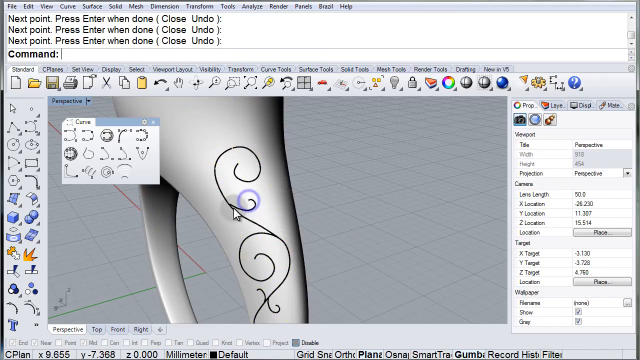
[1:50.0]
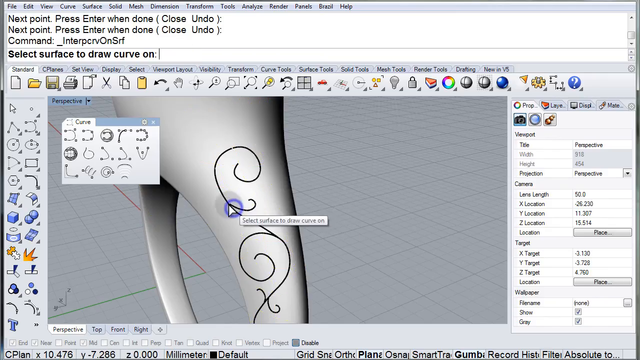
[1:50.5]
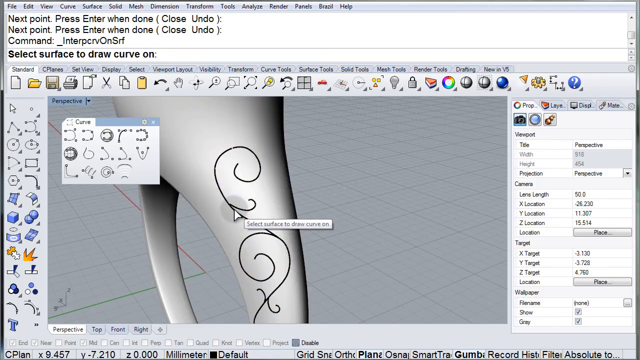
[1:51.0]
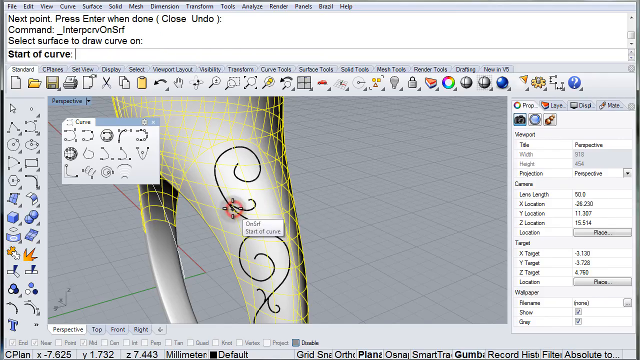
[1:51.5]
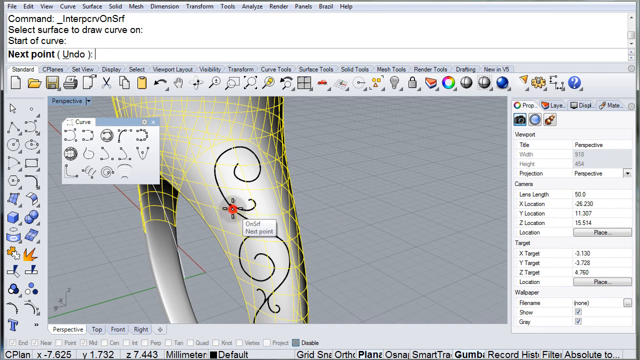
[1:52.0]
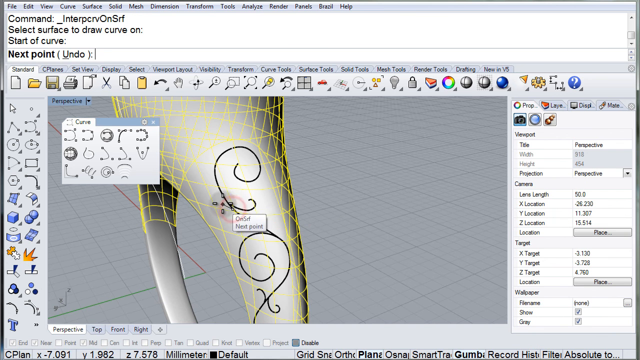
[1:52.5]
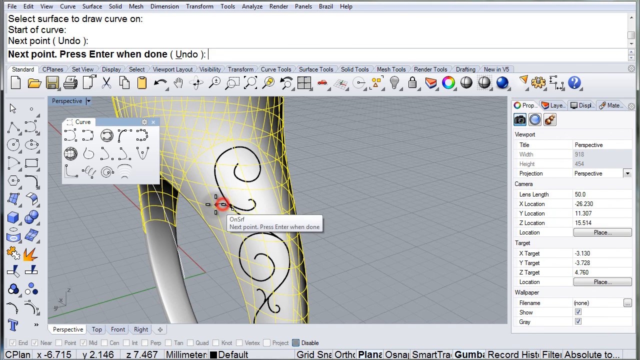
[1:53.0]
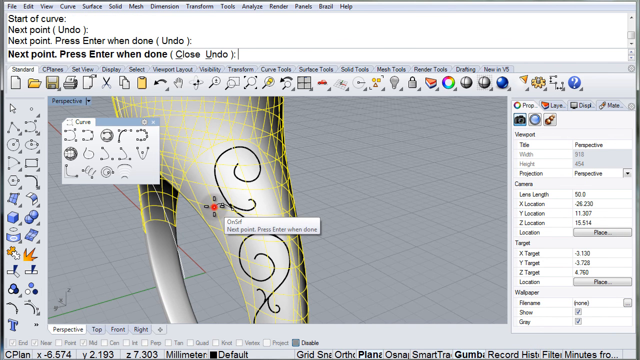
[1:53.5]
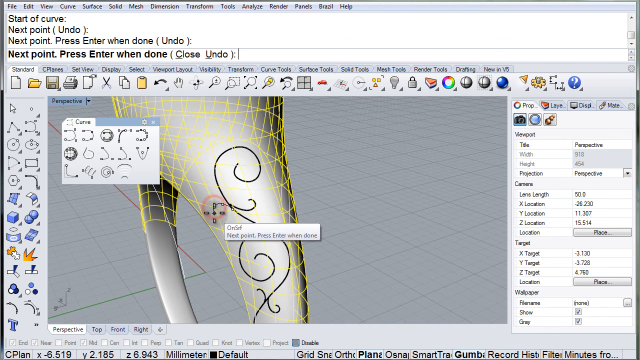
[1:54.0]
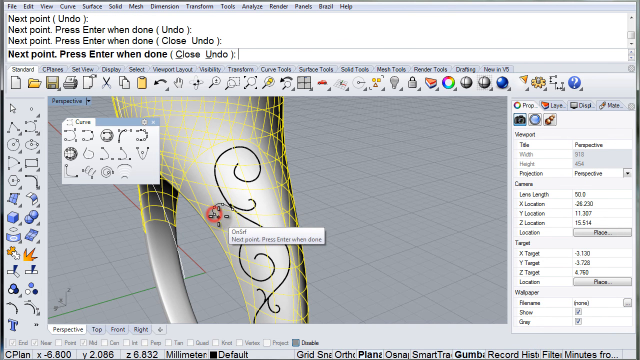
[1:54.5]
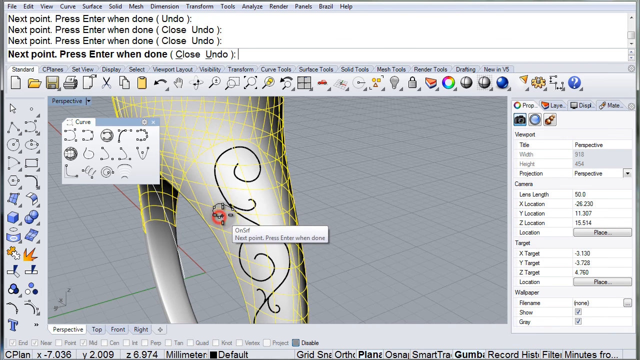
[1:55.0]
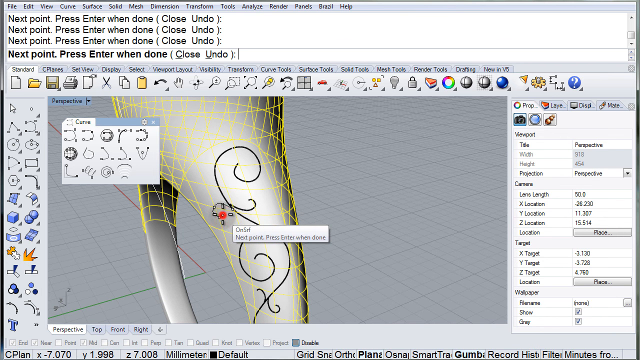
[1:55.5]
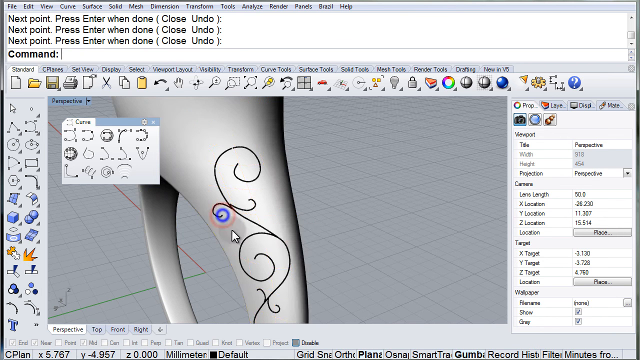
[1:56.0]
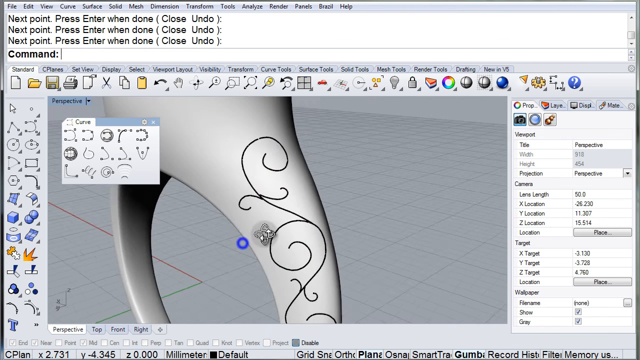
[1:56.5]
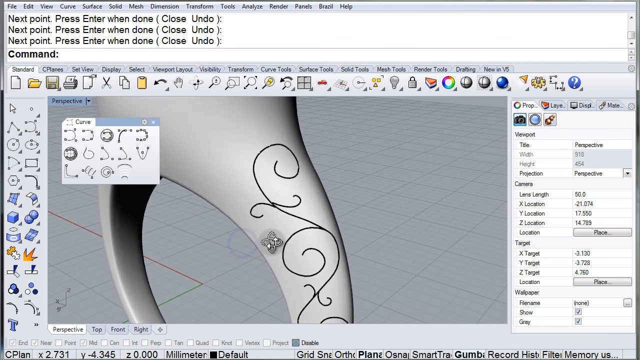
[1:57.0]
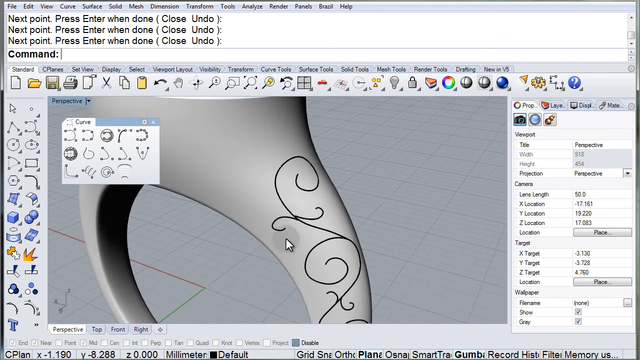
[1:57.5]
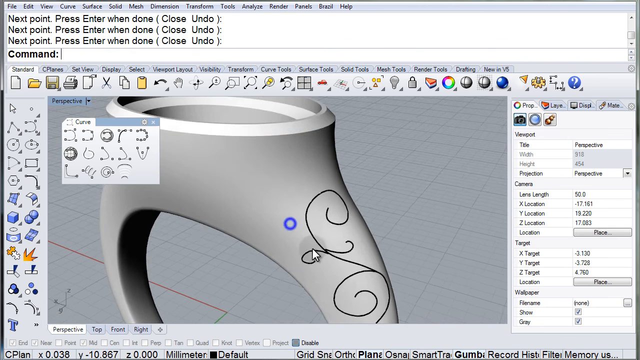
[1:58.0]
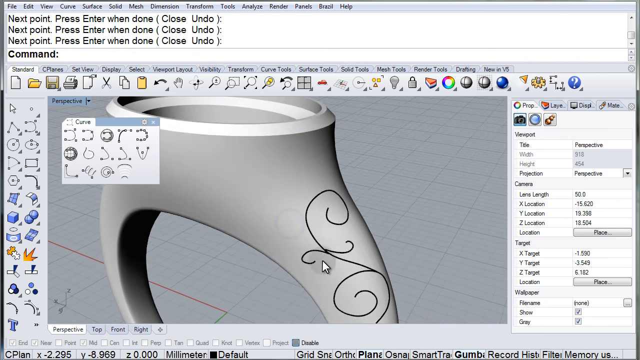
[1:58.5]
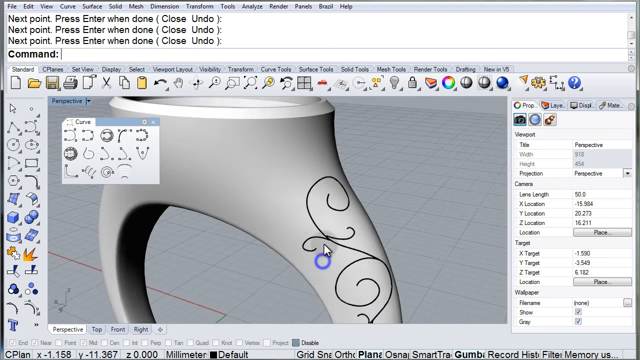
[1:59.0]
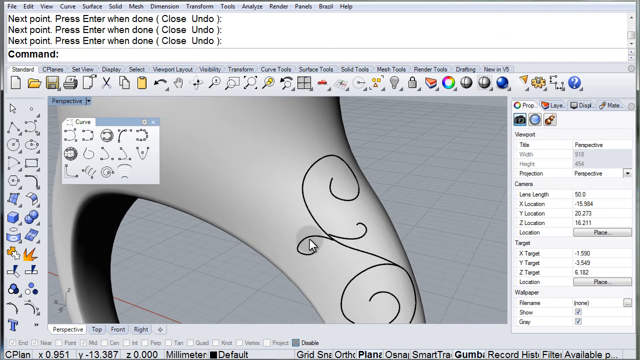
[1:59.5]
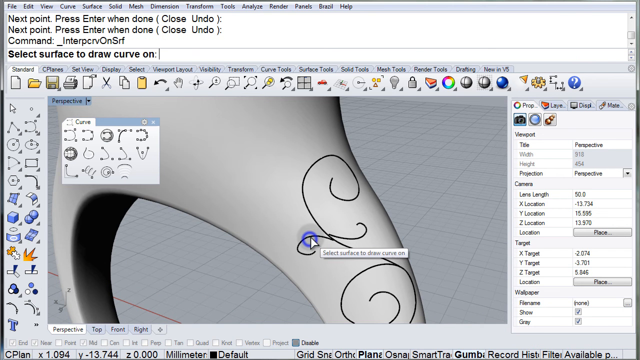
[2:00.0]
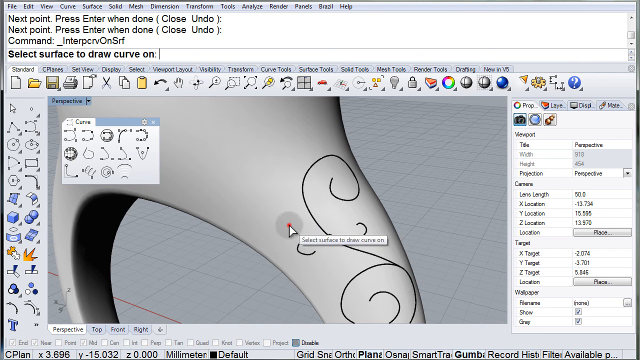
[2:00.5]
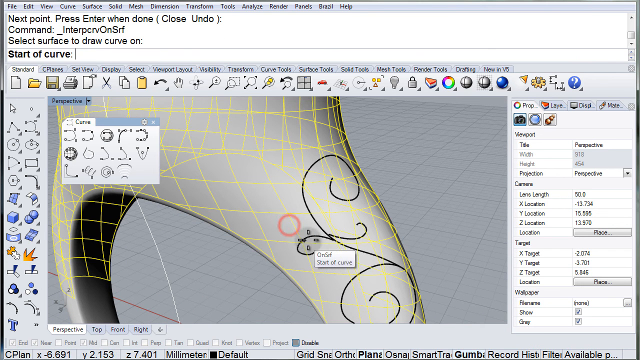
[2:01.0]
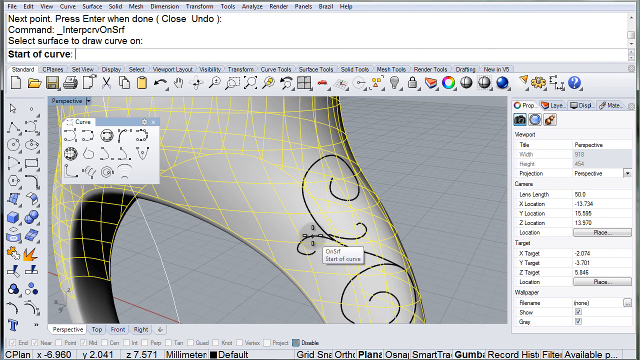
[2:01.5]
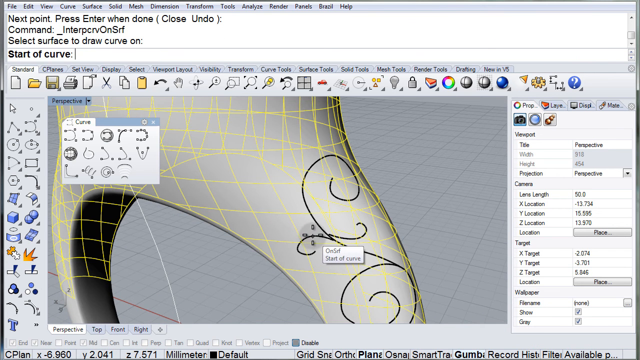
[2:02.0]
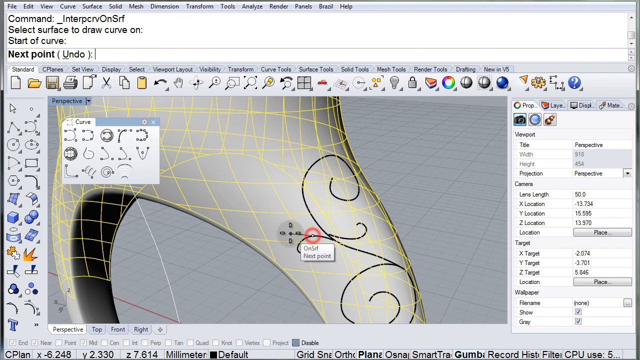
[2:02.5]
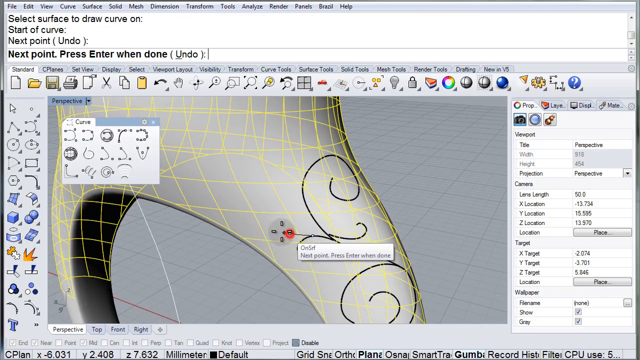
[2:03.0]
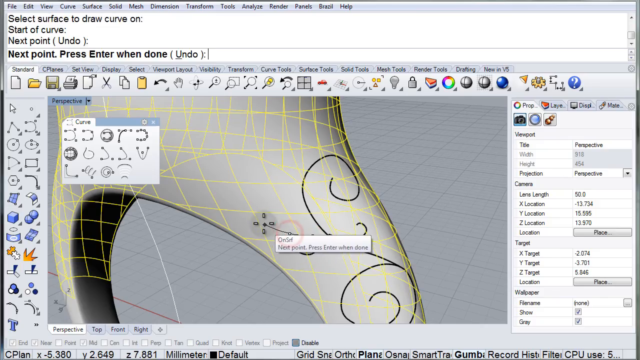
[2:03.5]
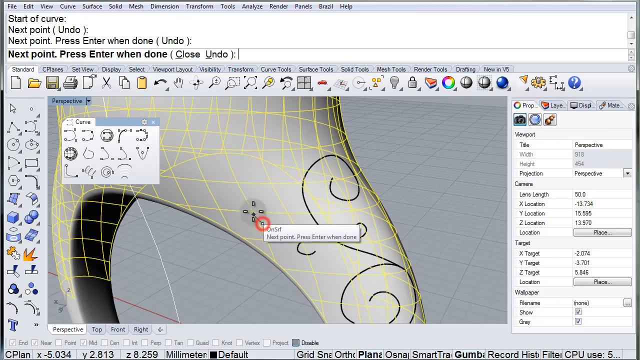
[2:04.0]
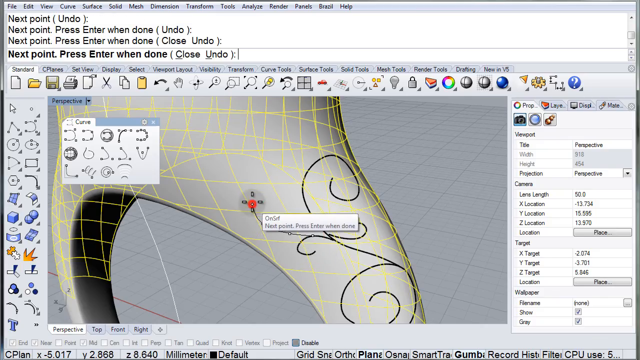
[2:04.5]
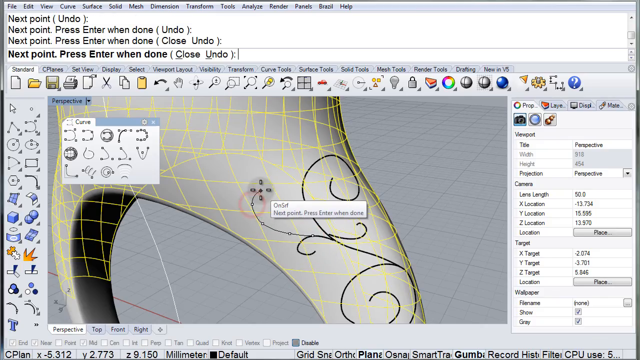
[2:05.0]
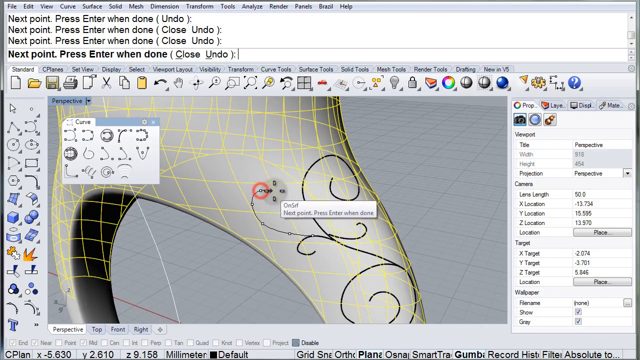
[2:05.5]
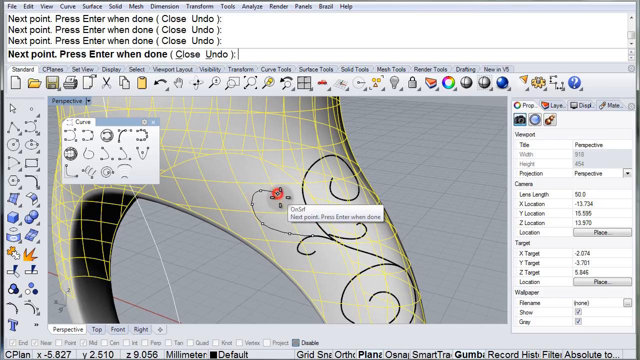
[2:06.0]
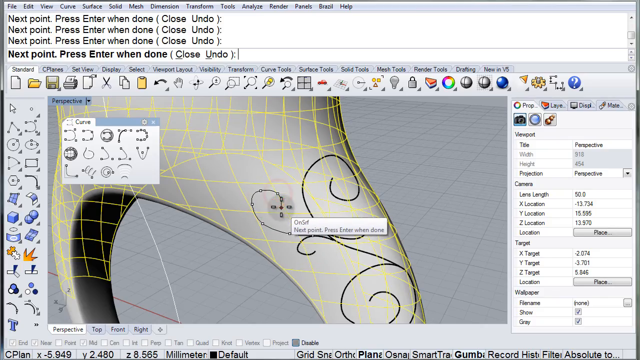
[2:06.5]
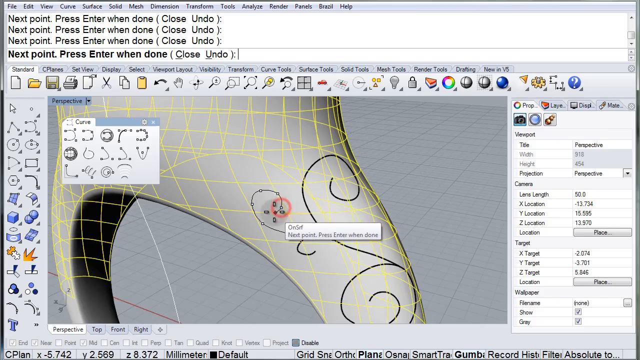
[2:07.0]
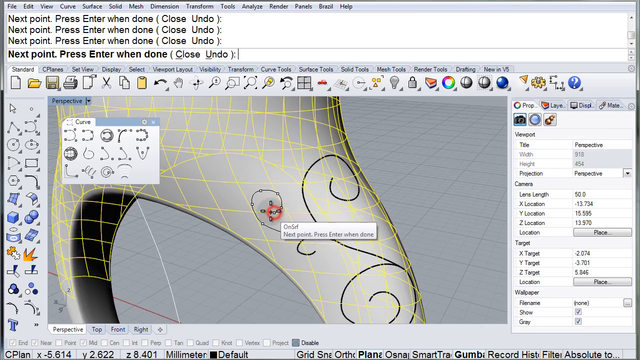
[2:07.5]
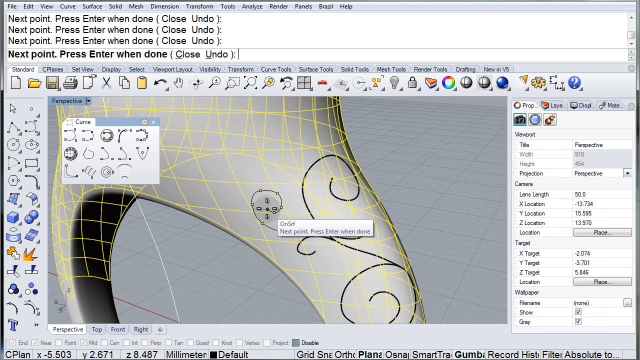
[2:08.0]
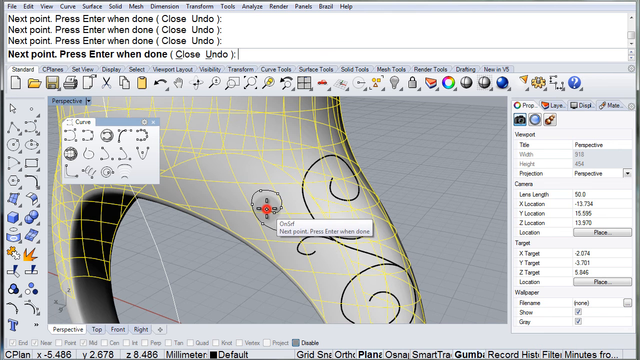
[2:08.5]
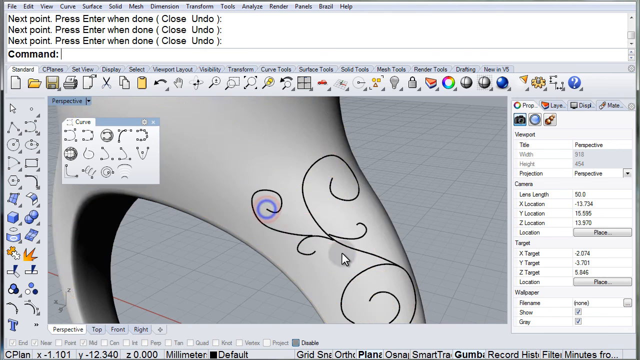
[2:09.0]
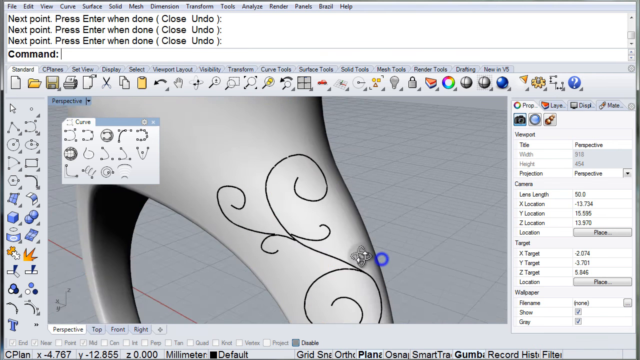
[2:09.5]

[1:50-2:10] The mouse continues the curlicue pointing up and to the right, then makes another off its left side pointing down and to the left, forming symmetrical little curlicues again. Coming out of the top of the left curlicue, it keeps clicking to make another curlicue pointing up and to the right. Throughout, the text box at the top changes: just before a click it reads "Select surface to draw curve on", after a click it reads "start a curve", then it keeps reading "next point press enter when done, close, undo", then "next point", and then "command".